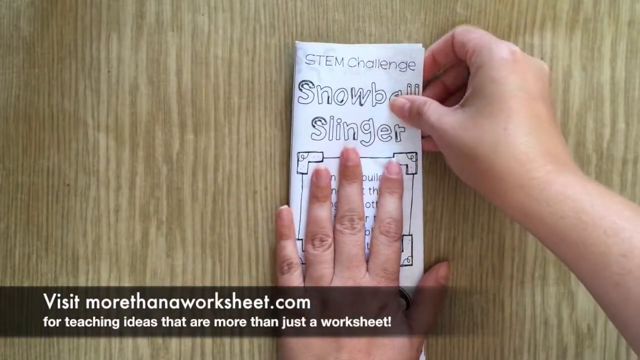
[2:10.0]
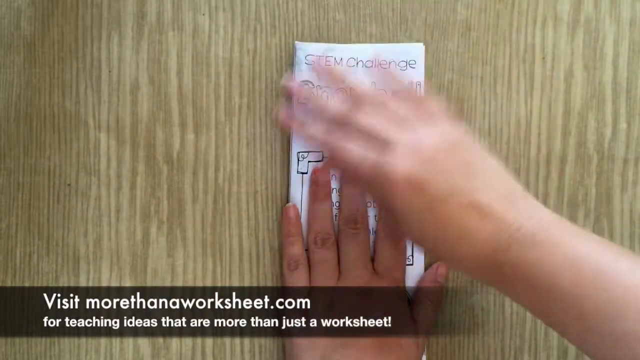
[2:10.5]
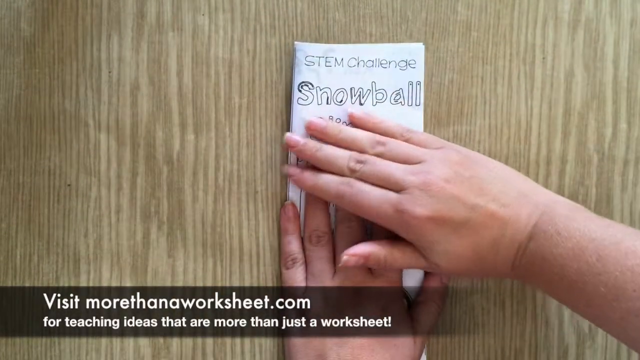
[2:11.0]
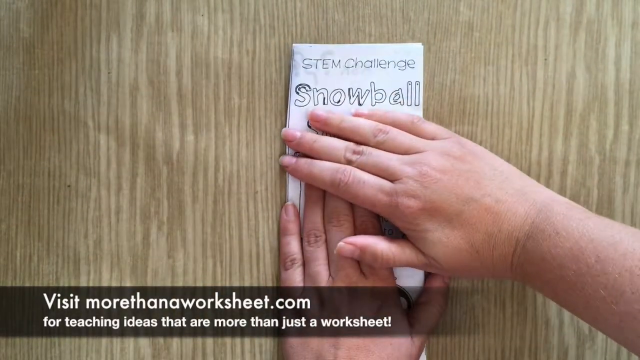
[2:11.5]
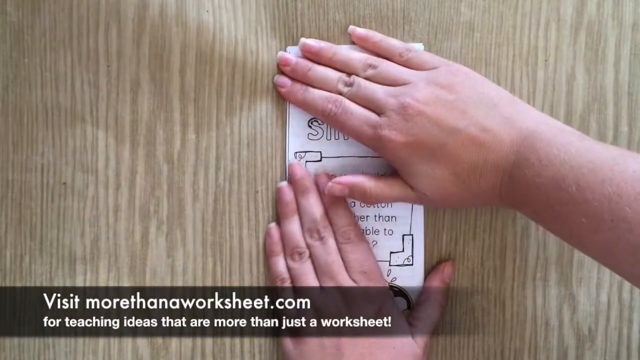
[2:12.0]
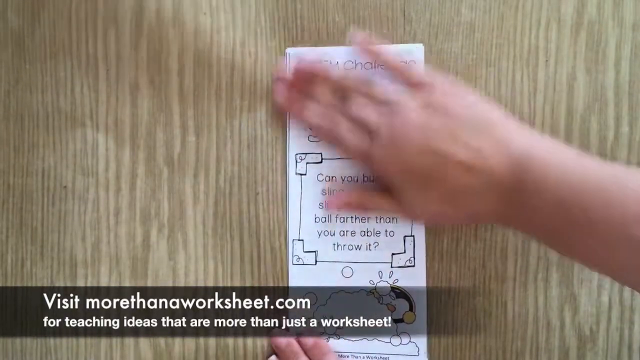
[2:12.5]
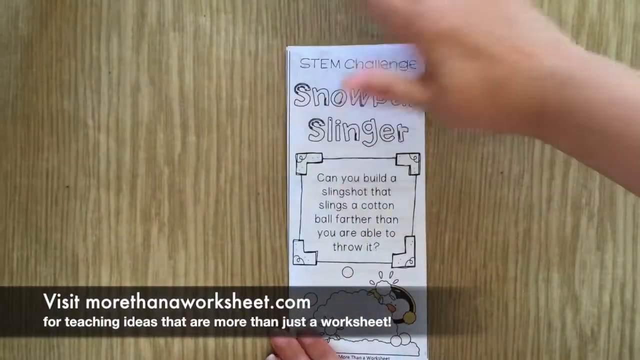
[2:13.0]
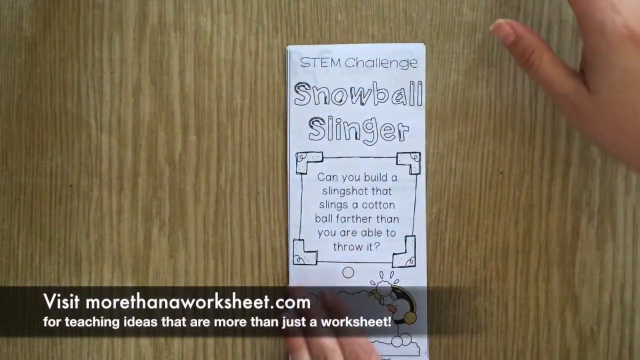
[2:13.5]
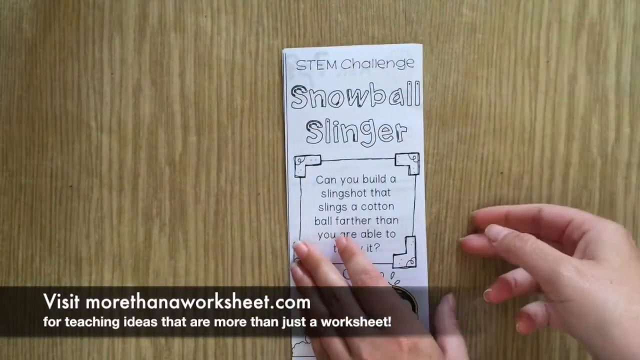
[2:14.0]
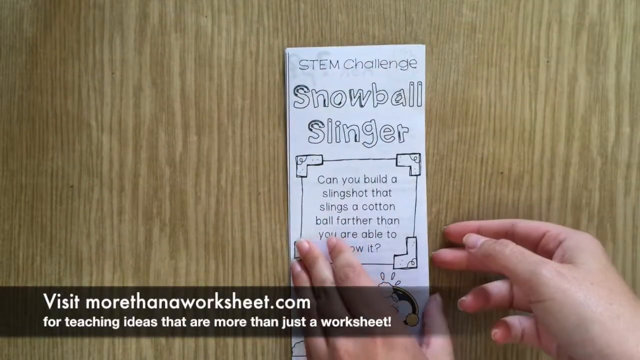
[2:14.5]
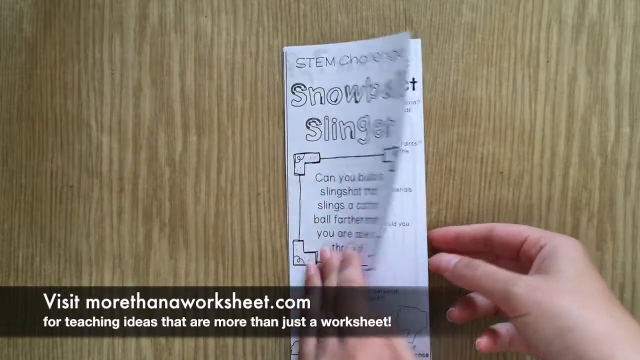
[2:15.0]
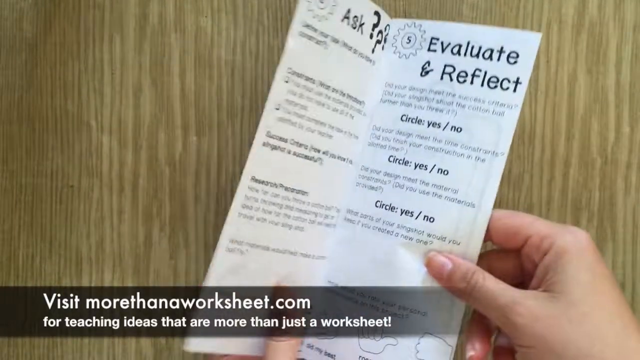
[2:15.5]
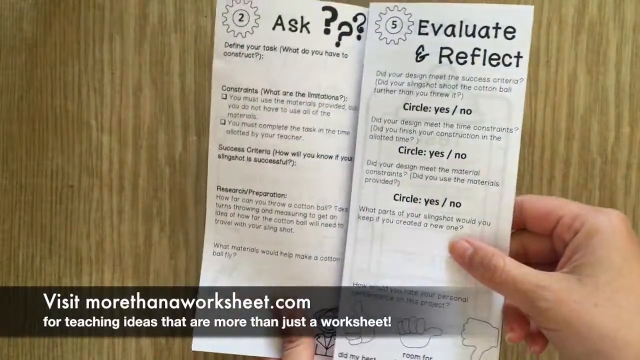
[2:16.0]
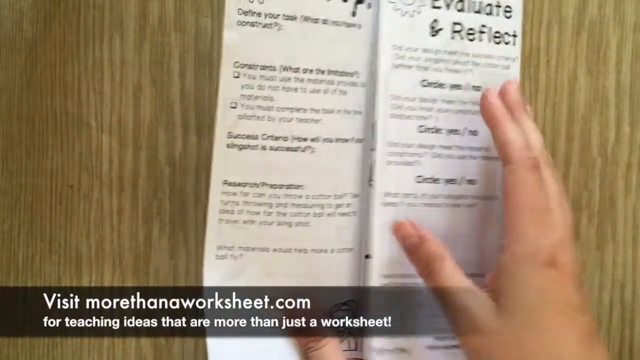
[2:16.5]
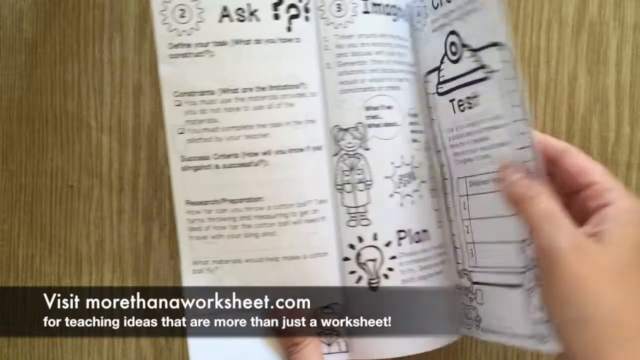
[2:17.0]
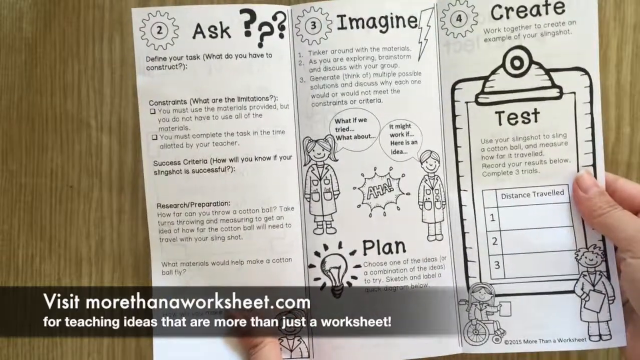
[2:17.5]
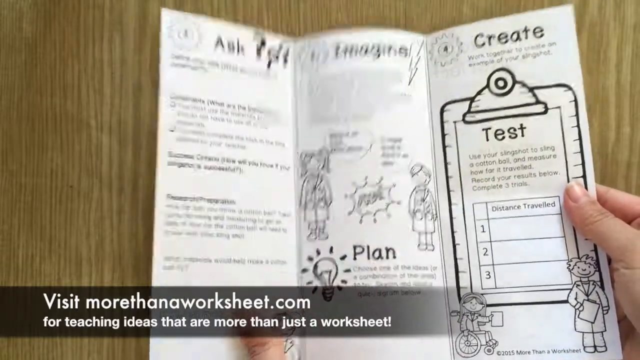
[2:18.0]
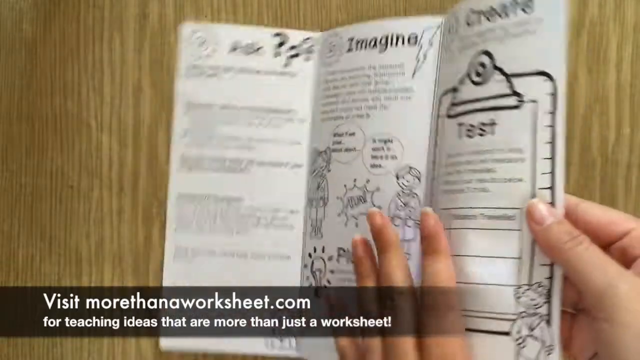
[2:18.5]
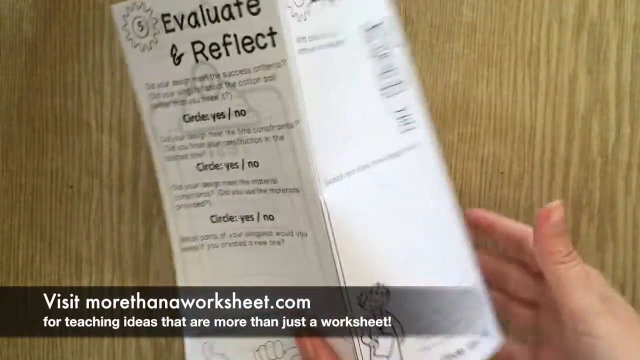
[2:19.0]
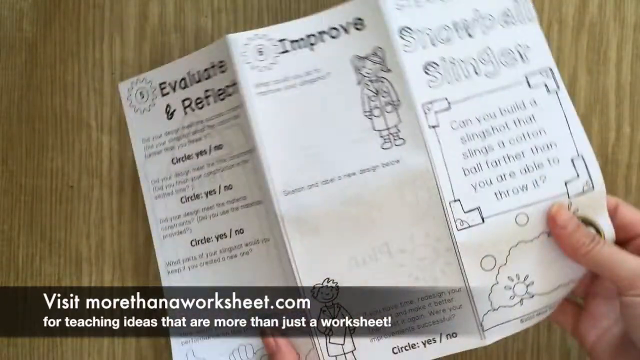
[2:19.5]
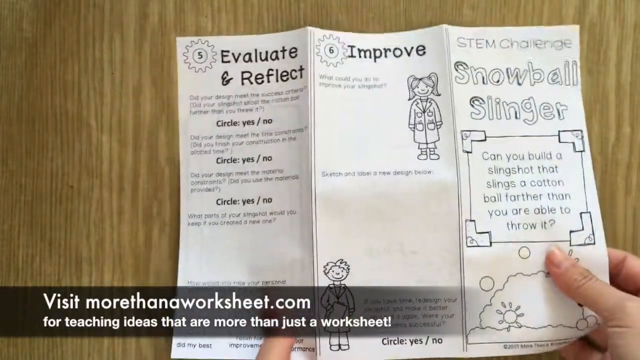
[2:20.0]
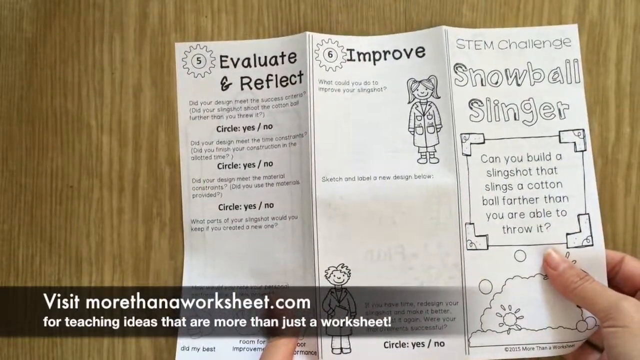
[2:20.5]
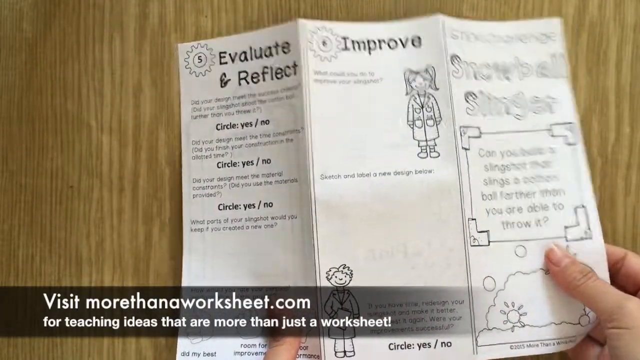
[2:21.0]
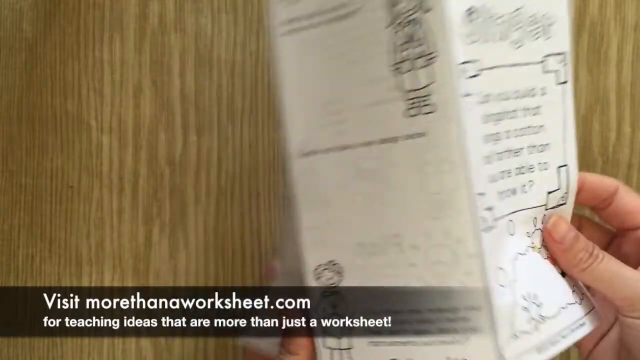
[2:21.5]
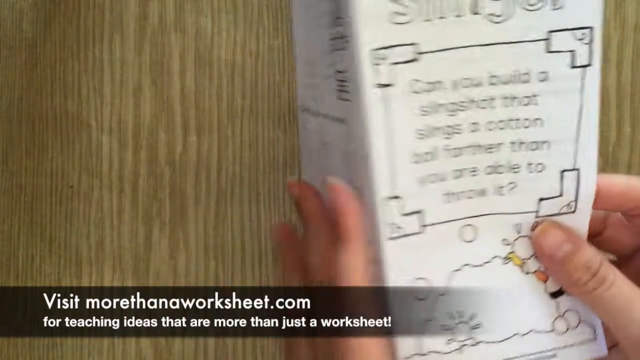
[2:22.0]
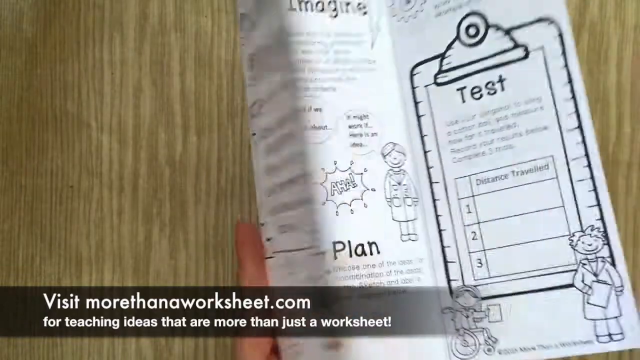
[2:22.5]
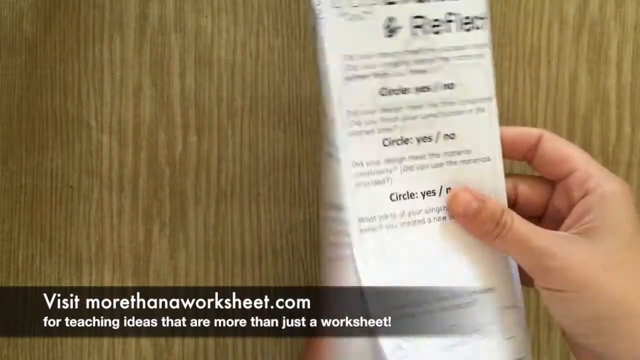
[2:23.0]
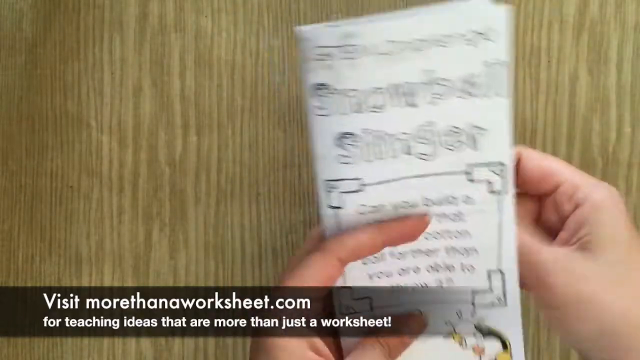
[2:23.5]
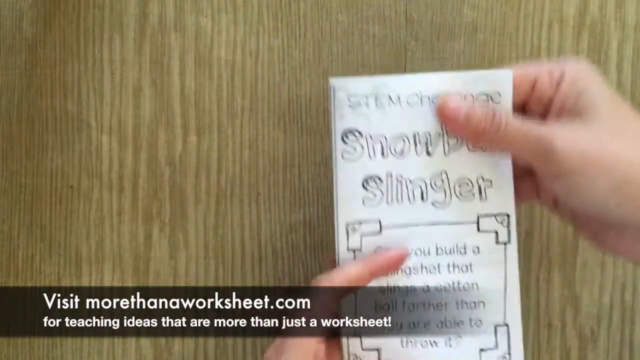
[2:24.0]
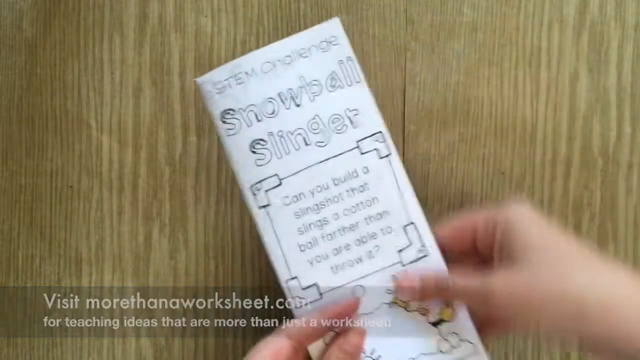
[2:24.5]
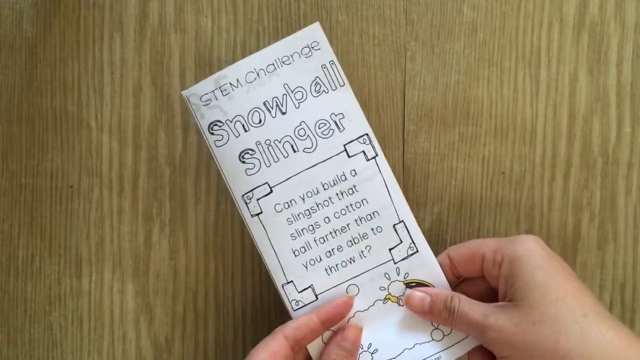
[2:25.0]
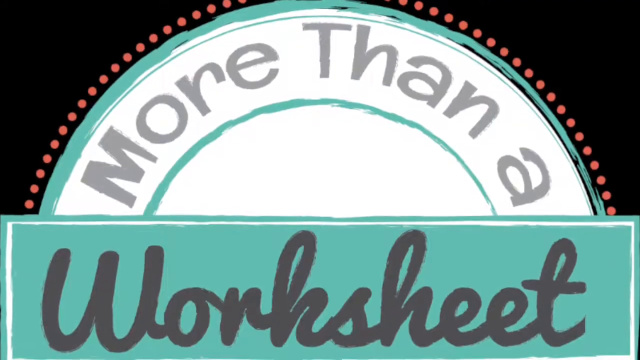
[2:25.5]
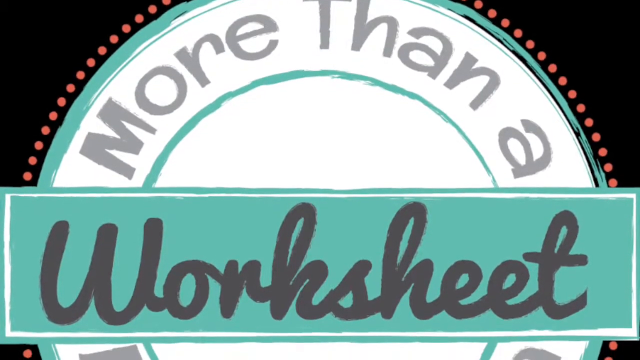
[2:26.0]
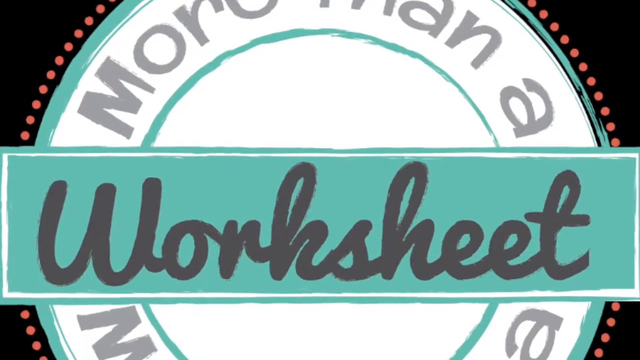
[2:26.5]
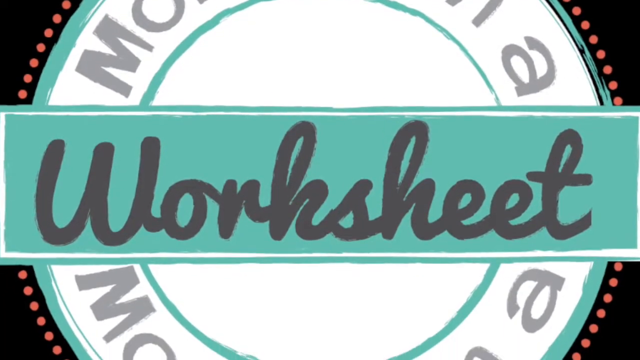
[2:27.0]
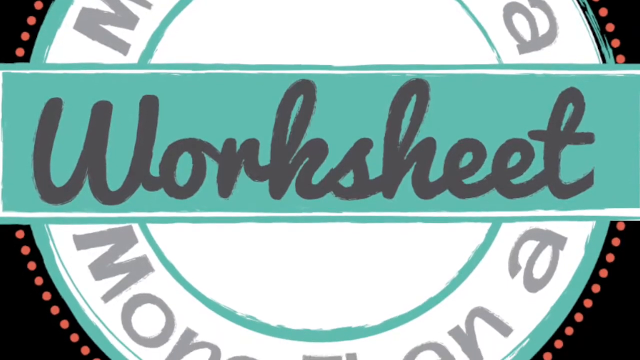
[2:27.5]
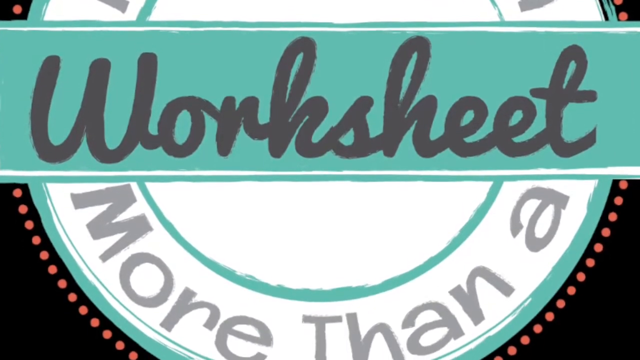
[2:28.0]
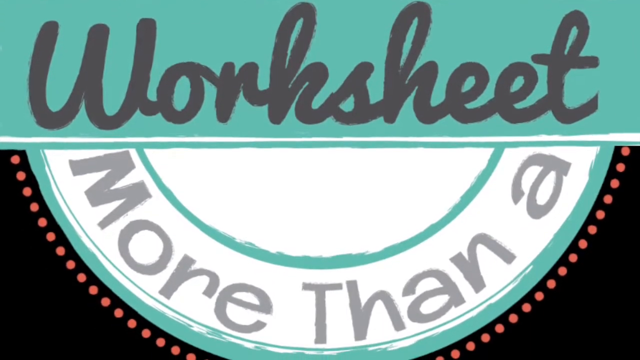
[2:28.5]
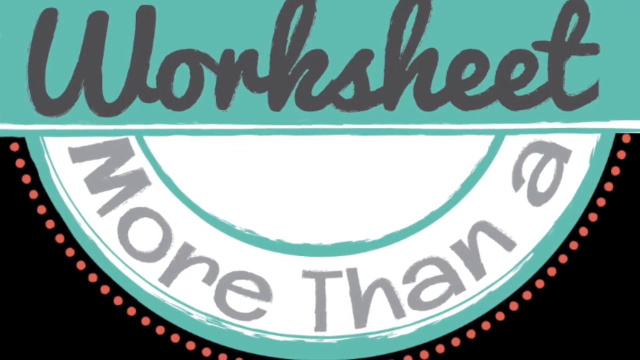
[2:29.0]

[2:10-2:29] Text reads "more than a worksheet.com for teaching ideas". A woman's hand puts the STEM challenge together. The first page shows "ask," "define your task," "what do you have to do," and "evaluate and reflect." Opened up, it shows "imagine" with many figures of people, and "create" with "test" and "distance traveled." On the other side are "evaluate and reflect" with circles and options yes or no; she switches to the right side, which also has yes or no, ending with "improve." Two figures of children are visible. The view goes back to the snowball slinger, and at the end a sign reads "more than a worksheet."